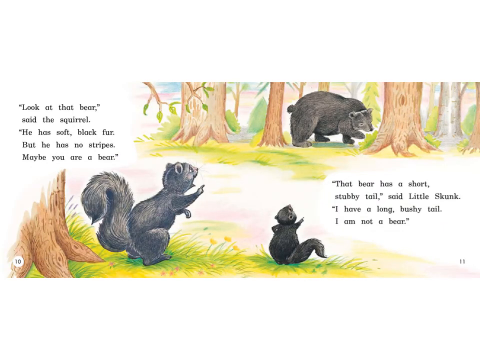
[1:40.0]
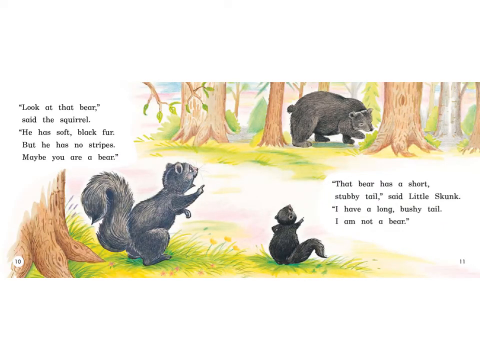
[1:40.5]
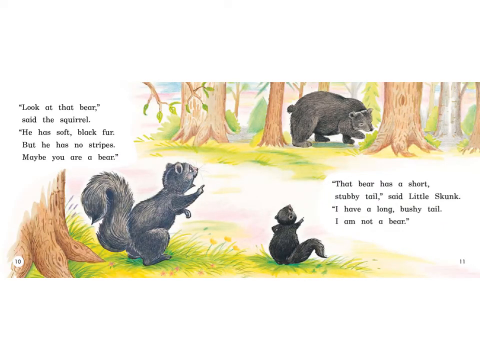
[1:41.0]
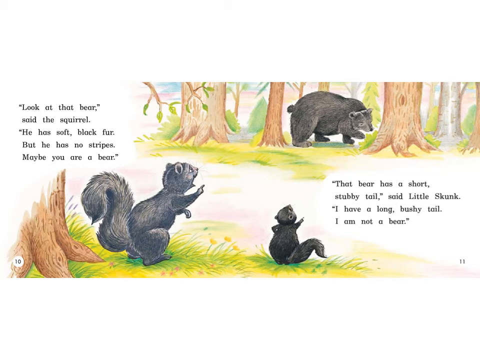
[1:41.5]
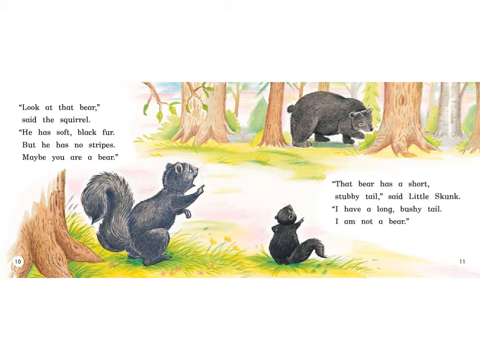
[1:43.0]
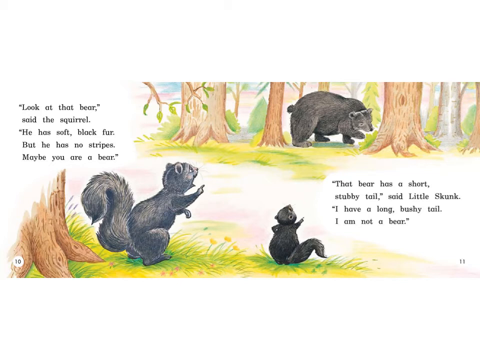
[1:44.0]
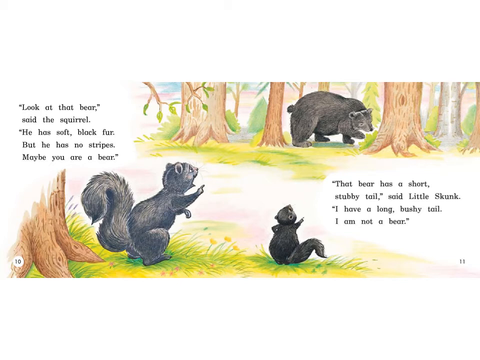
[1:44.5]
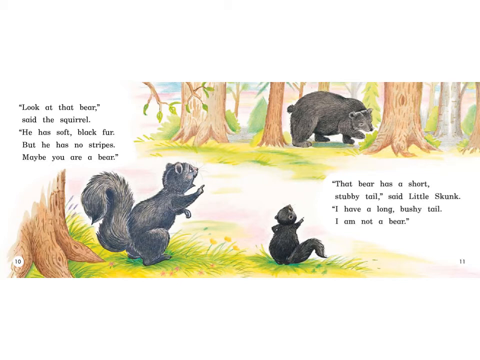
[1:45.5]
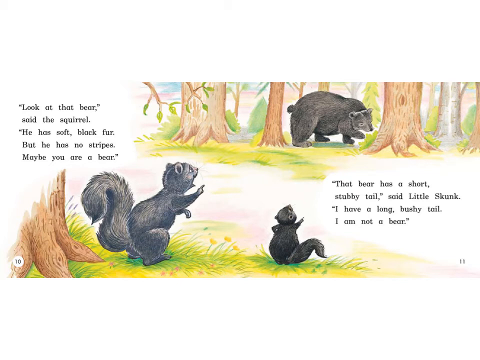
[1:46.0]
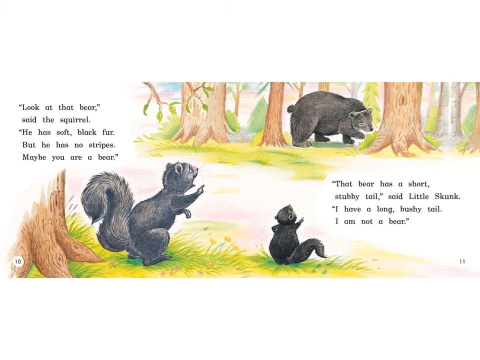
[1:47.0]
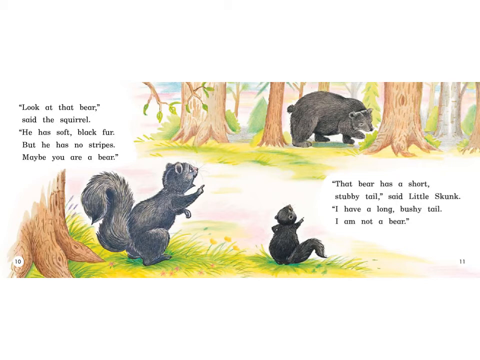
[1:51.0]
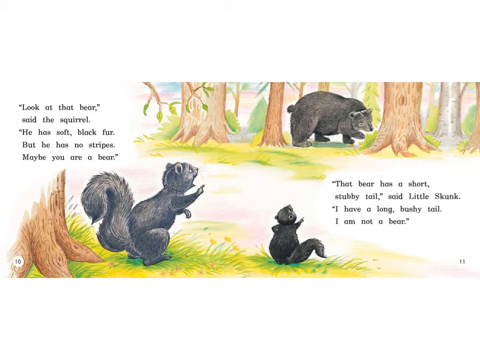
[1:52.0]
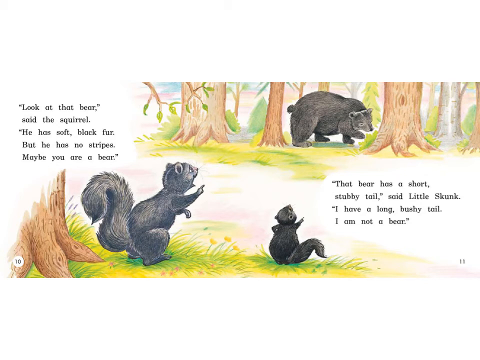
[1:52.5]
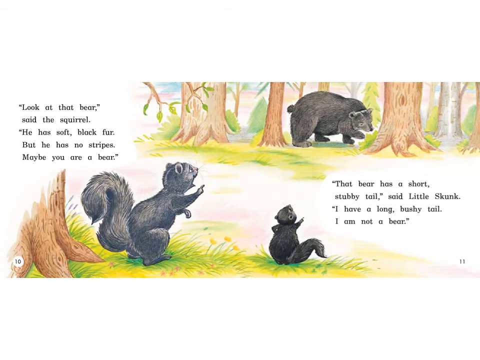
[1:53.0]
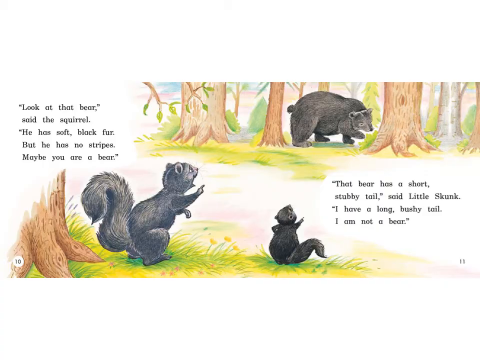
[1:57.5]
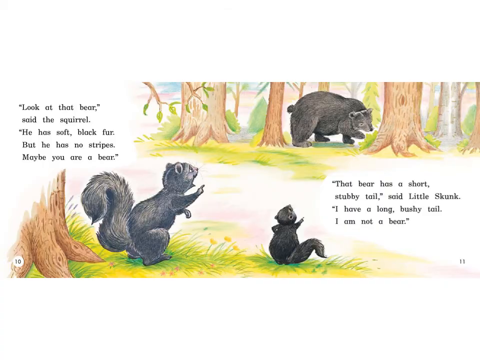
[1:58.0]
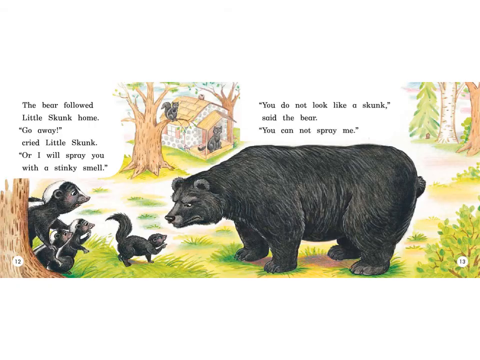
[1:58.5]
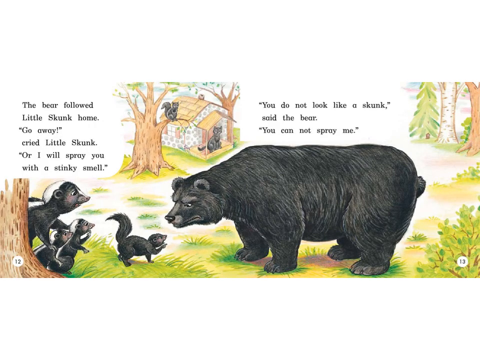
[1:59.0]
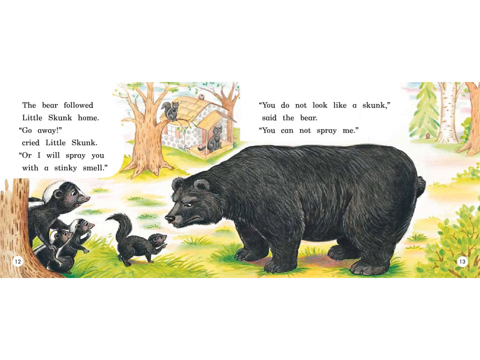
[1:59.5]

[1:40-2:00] A picture shows a bear walking in the forest, and the skunk and the squirrel approach near it. The text reads "Look at that bear, said the squirrel. He has soft, black fur, but he has no stripes. Maybe you are a bear. That bear has a short, stubby tail, said little skunk. I have a long, bushy tail. I am not a bear." The skunk and the squirrel are both seated in the same place, pointing at the bear at the other end of the forest. The next page has a squirrel on top of a tree and the cat seated outside the house, and the bear comes near the animals. The text reads "The bear followed little skunk home. Go away, cried little skunk, or I will spray you with a stinky smell. You do not look like a skunk? said the bear. You cannot spray me." The bear keeps facing the skunk.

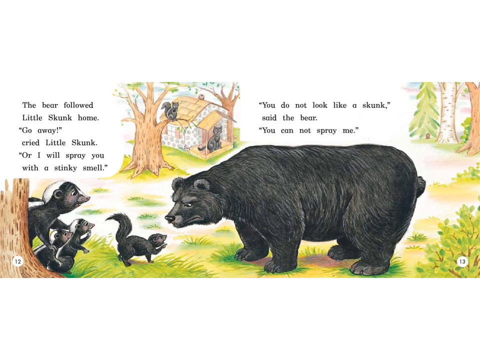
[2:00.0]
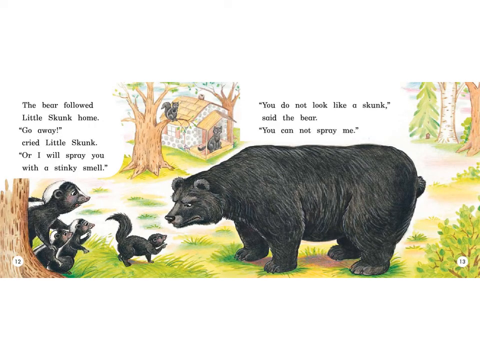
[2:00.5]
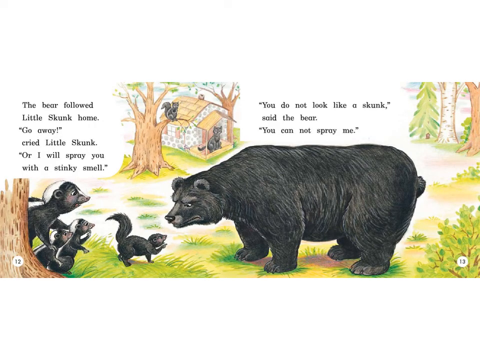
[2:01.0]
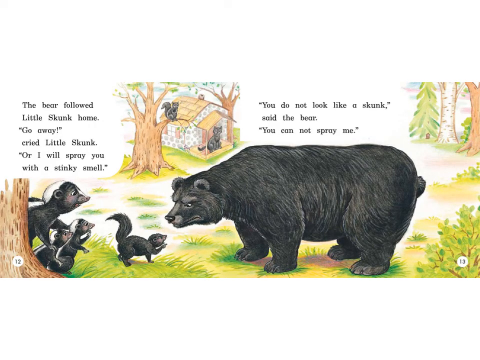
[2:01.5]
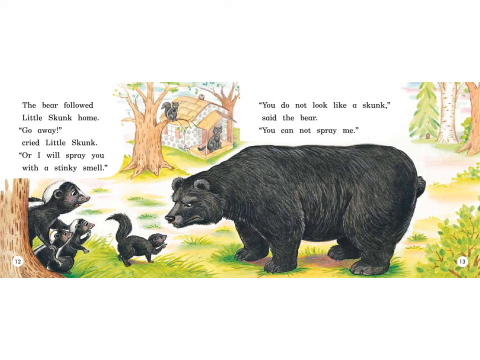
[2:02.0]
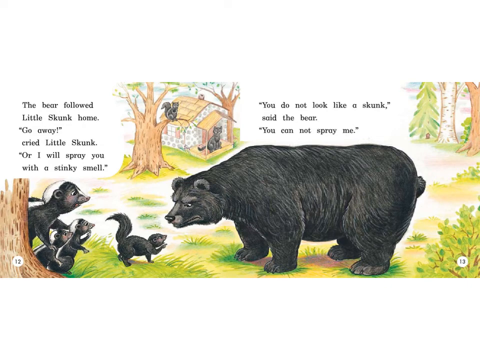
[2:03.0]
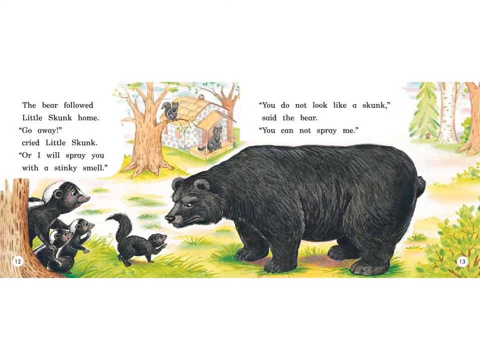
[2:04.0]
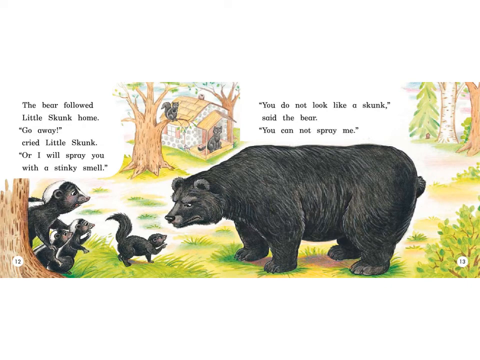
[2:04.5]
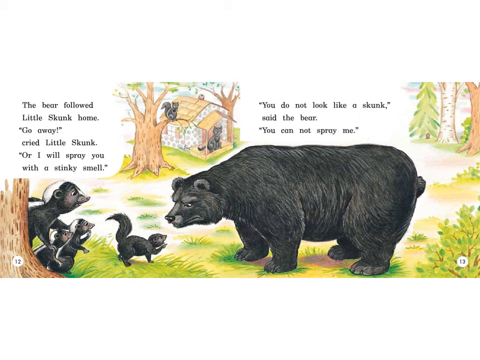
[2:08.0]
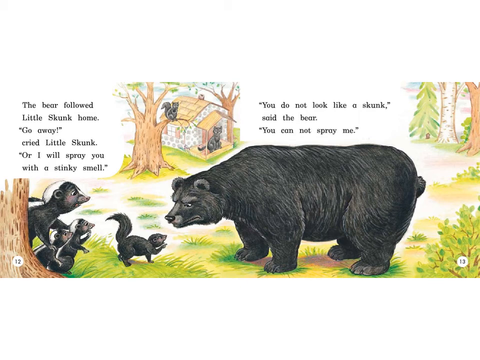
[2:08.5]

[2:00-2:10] A picture shows a skunk, a bear and a cat; the skunk is on top of a tree with a squirrel over it. The text reads "The bear followed little skunk home. Go away, cried little skunk, or I will spray you with a stinky smell. You do not look like a skunk, said the bear. You cannot spray me." The bear looks at the skunk and the squirrel, facing the skunks, and the cat is also there. The bear looks like it is trying to be friendly with the skunks, but the skunk seems kind of scared and unwilling.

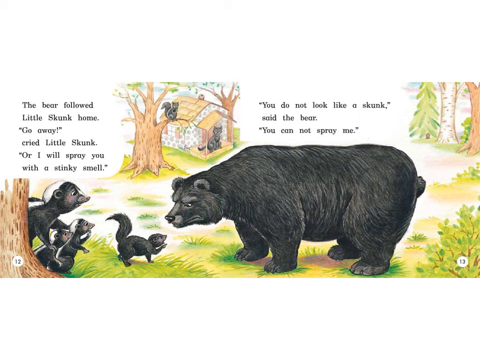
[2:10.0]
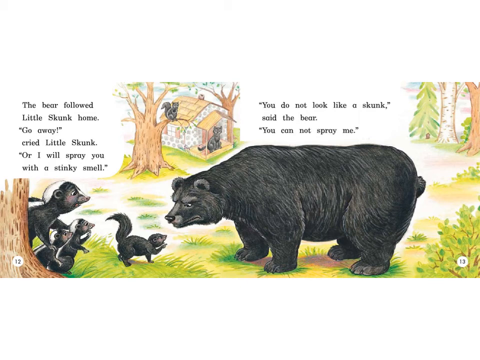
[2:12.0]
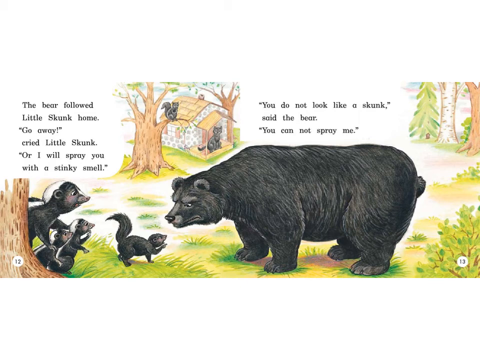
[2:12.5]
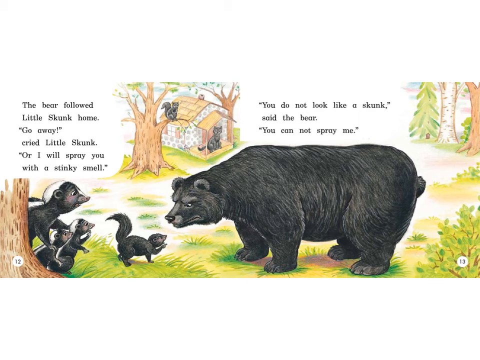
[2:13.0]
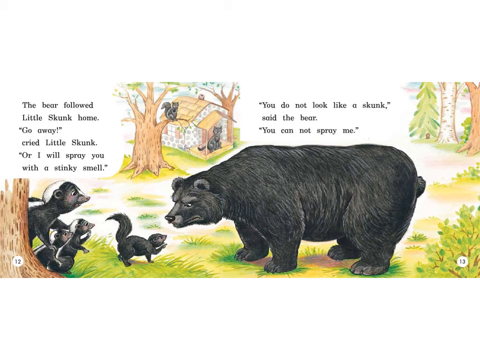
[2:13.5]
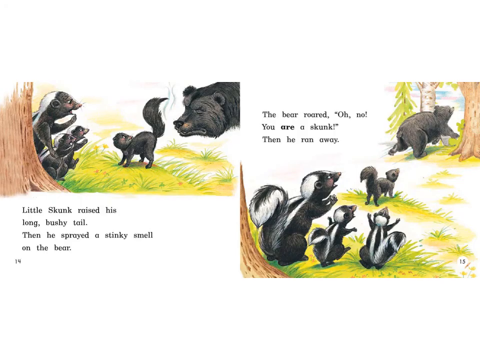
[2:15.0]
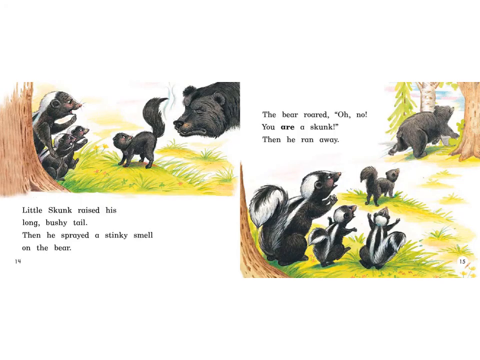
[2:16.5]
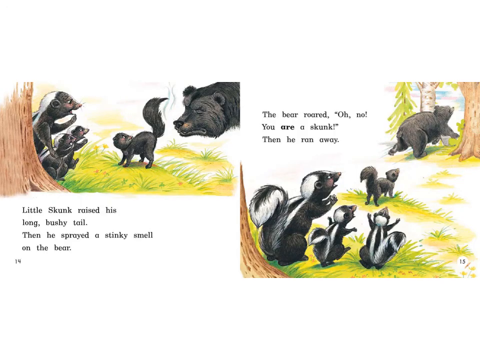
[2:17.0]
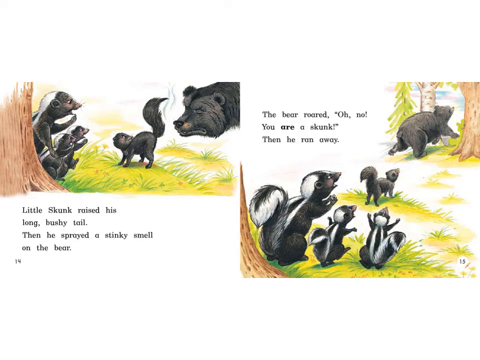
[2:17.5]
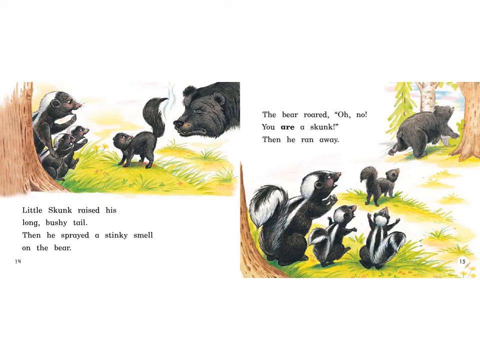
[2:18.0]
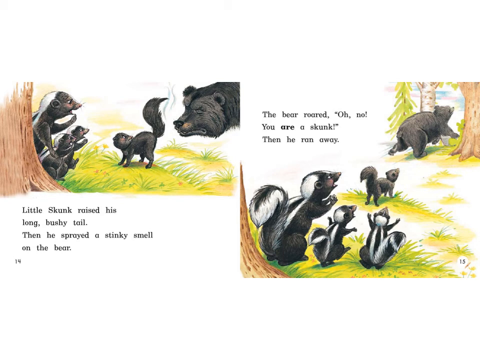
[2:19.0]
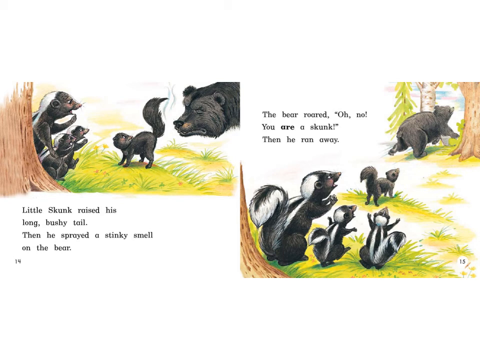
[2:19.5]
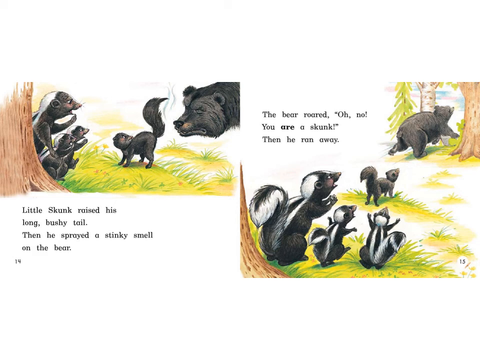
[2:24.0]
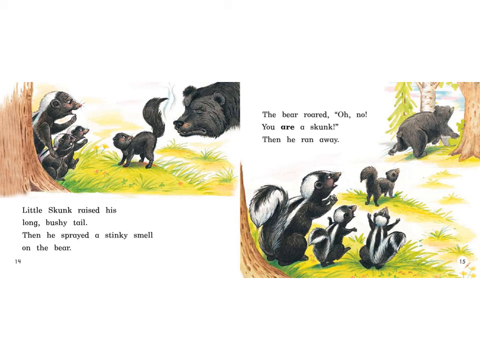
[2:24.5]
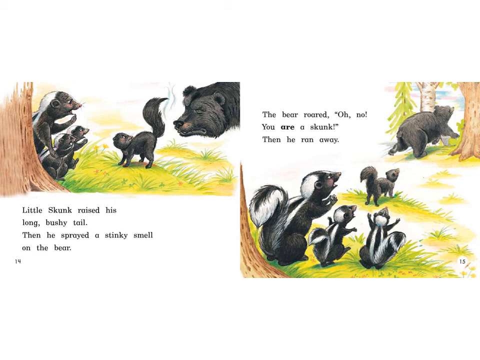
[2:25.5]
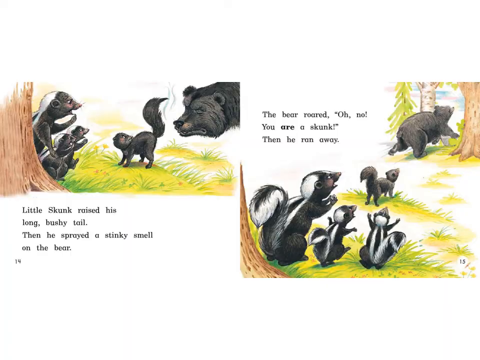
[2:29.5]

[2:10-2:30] The text reads "The bear followed little skunk home Go away, cried little skunk, or I will spray you with a stinky smell." The skunk looks kind of scared, but the bear is still facing them, and the cat is seated outside the house. The text continues "You do not look like a skunk, said the bear. You cannot spray me." In the next scene the text reads "Little skunk raised his long, bushy tail. Then he spread a stinky smell on the bear. The bear roared, Oh no, you are a skunk. Then he ran away."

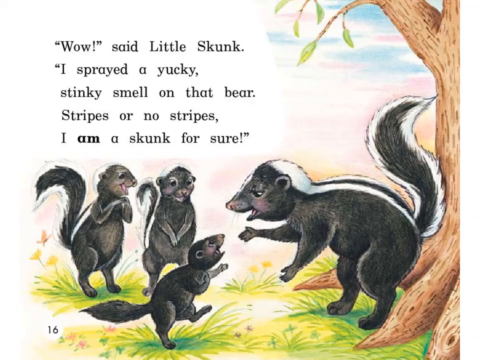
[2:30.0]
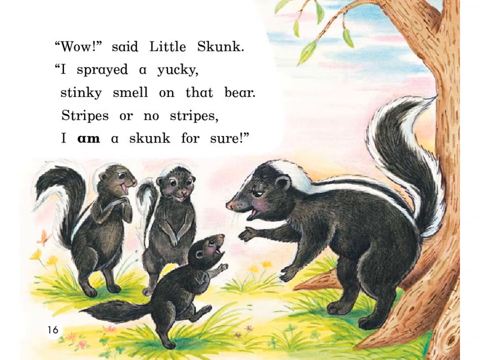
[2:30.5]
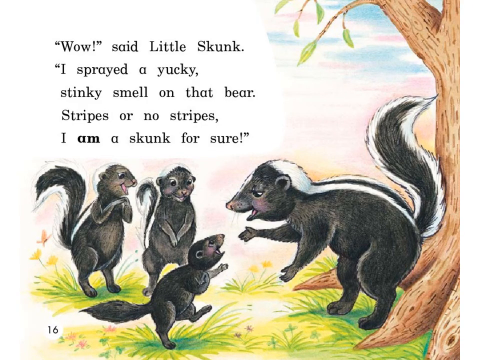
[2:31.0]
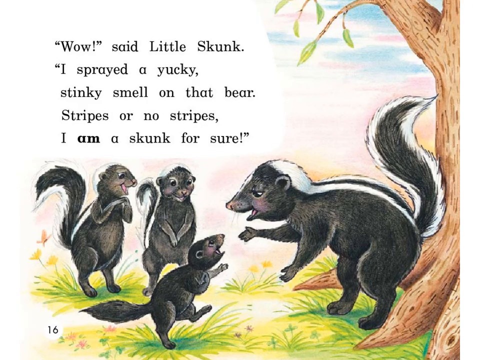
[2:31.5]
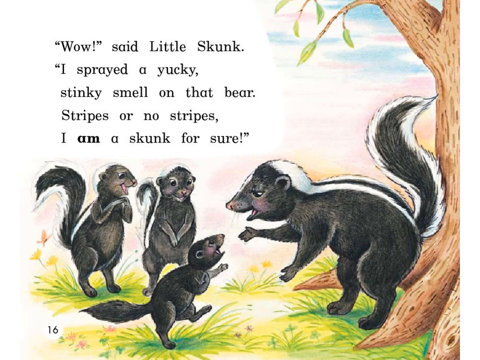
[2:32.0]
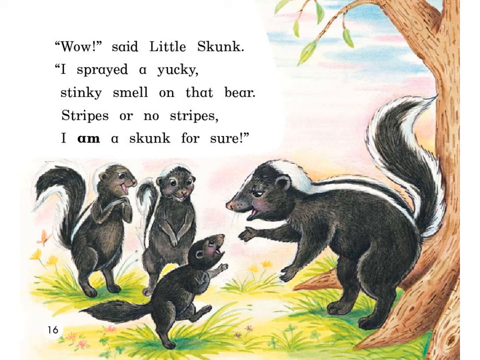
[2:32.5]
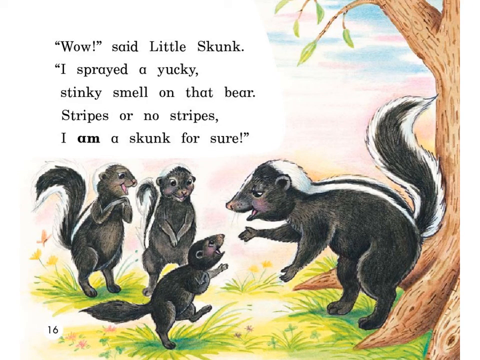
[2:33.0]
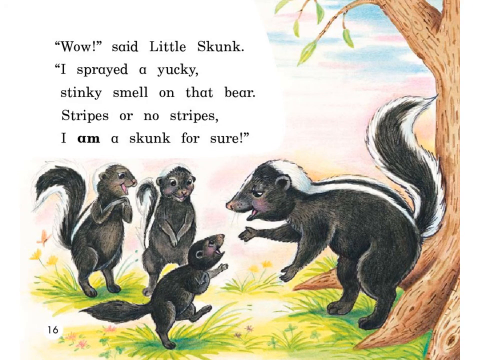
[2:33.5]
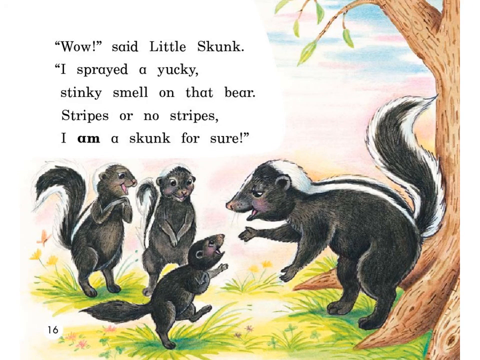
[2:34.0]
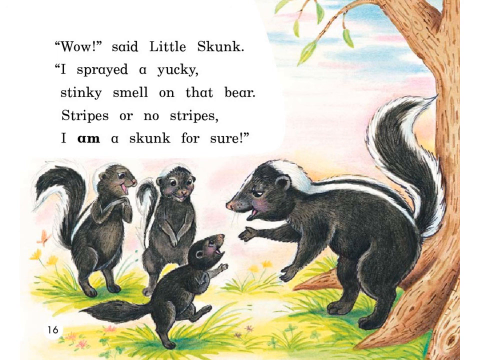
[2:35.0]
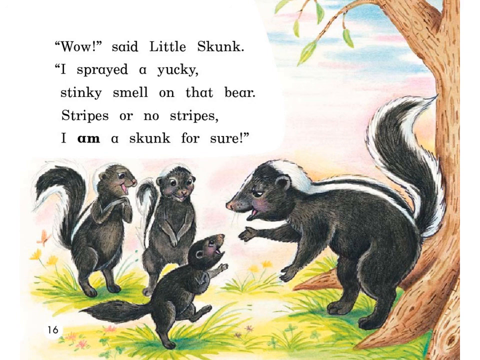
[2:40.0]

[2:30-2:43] Some skunks are sitting in the garden with a tree behind them. The text reads "Wow, said little skunk. I spread a yucky, stinky smell on that bear, stripes or no stripes, I am a skunk for sure." The skunks look like they are celebrating after spraying the bear, and the others are really celebrating.